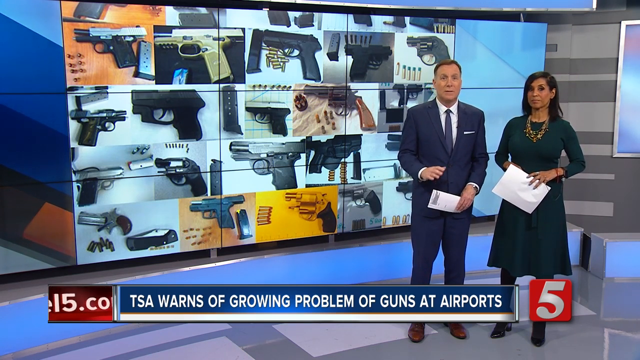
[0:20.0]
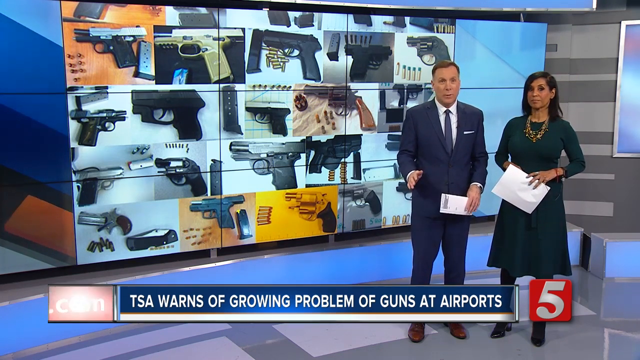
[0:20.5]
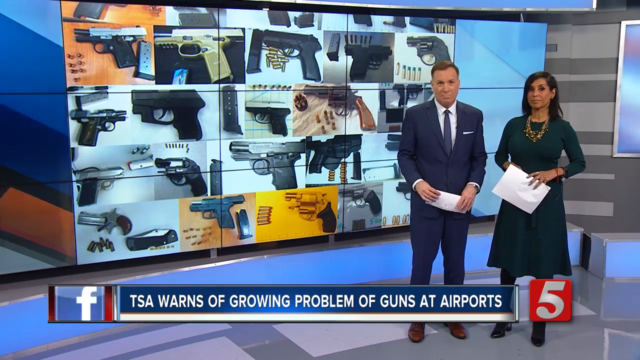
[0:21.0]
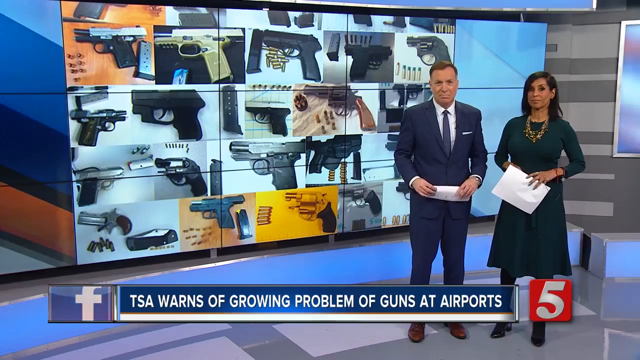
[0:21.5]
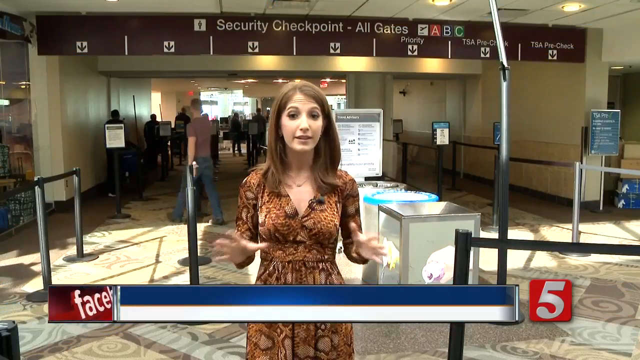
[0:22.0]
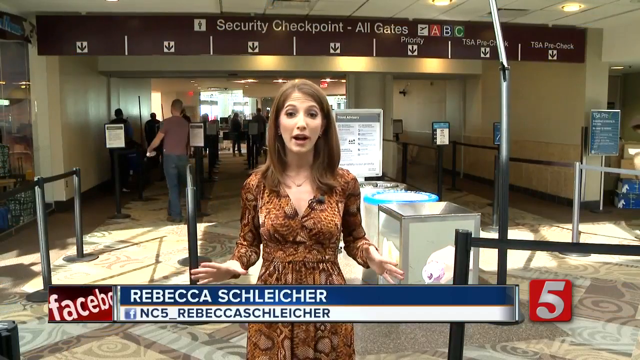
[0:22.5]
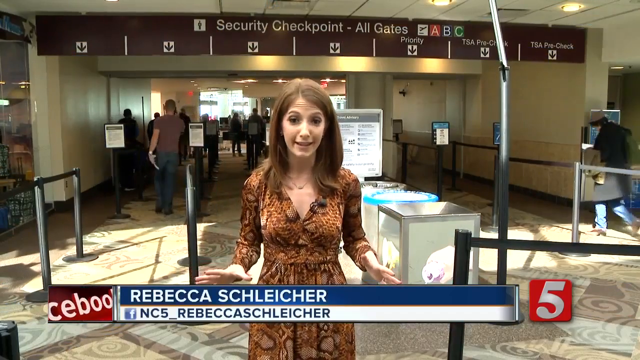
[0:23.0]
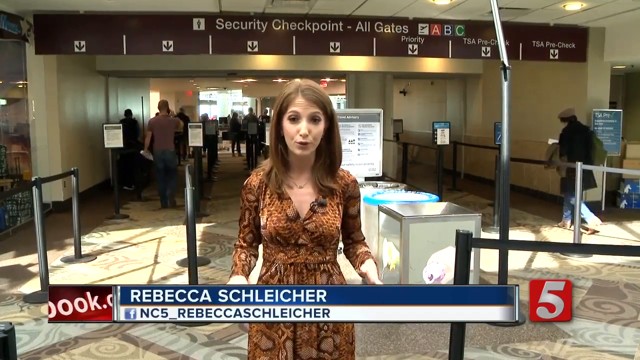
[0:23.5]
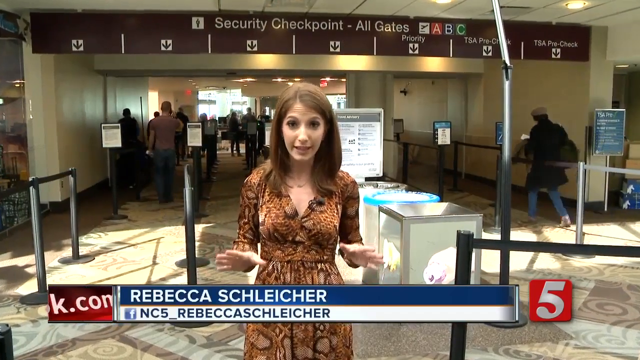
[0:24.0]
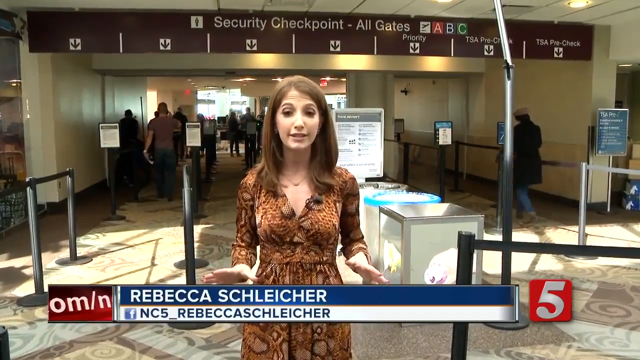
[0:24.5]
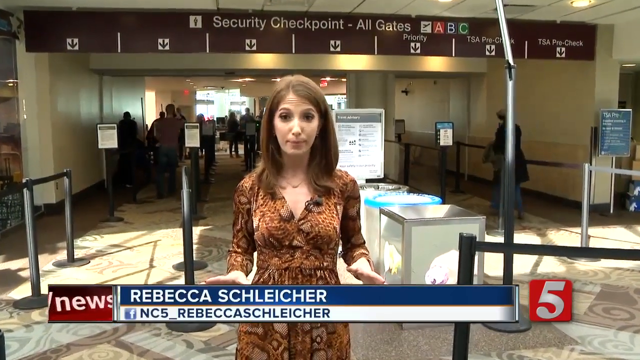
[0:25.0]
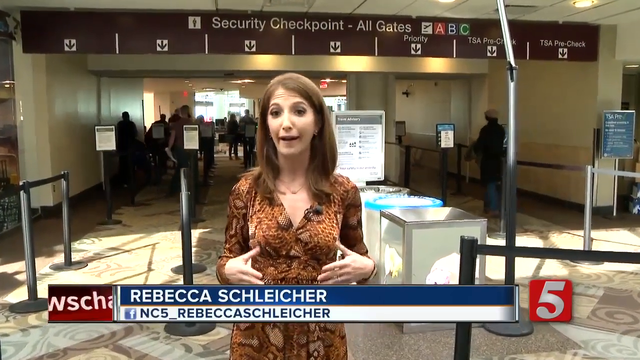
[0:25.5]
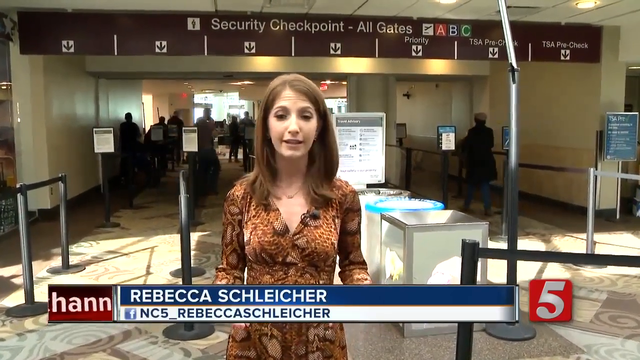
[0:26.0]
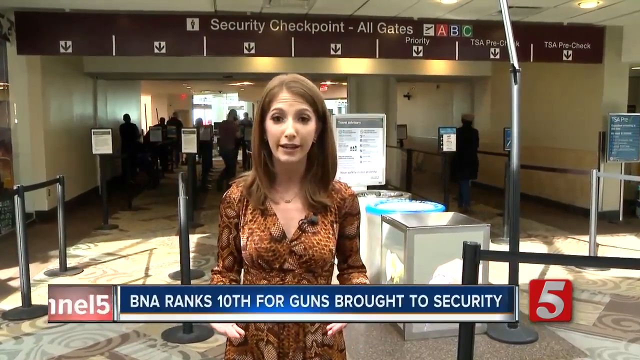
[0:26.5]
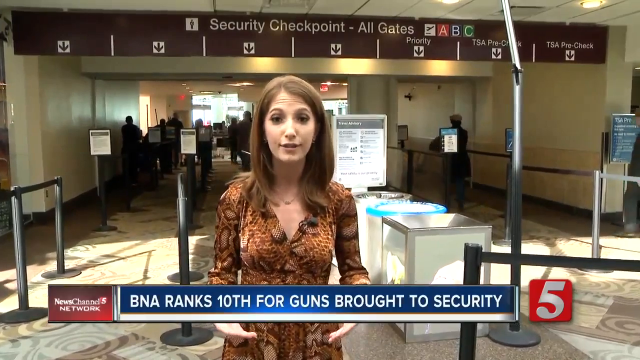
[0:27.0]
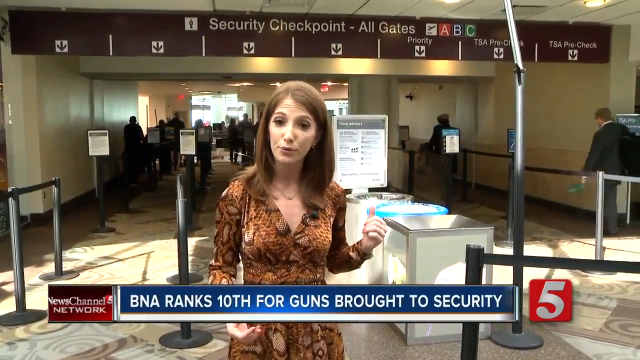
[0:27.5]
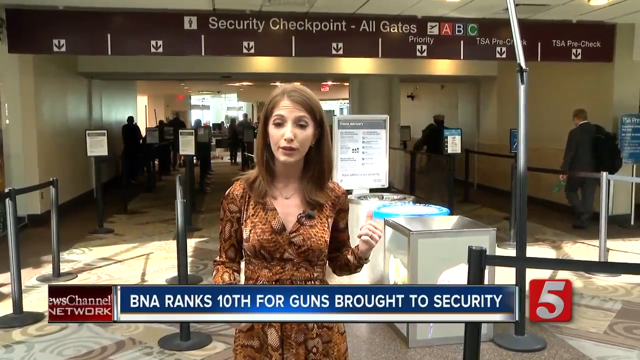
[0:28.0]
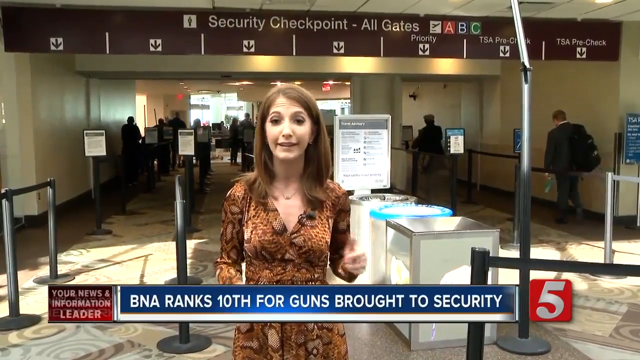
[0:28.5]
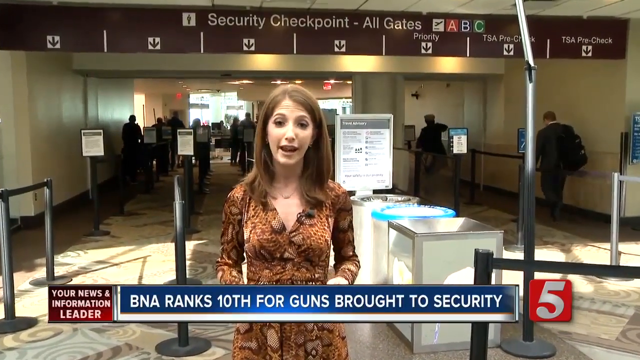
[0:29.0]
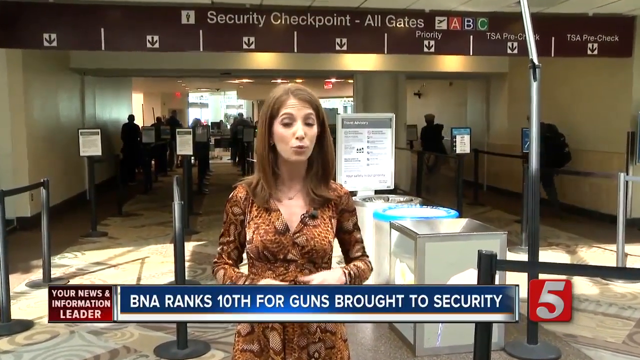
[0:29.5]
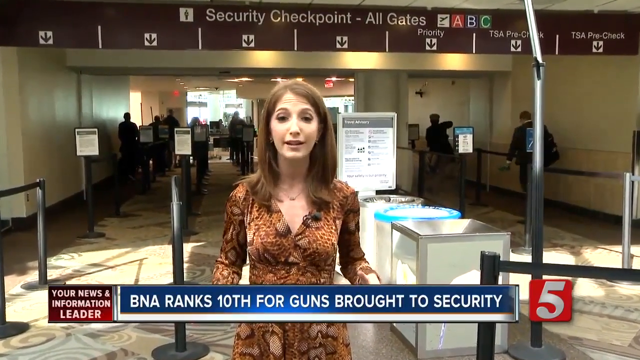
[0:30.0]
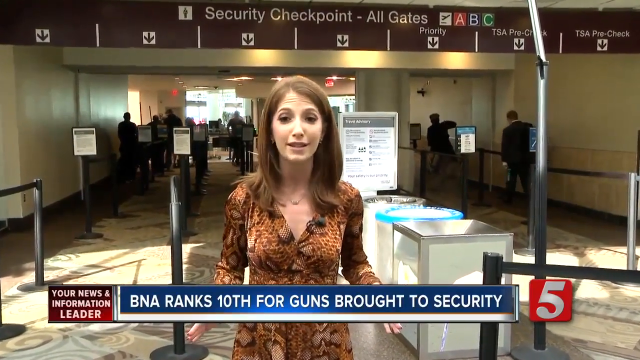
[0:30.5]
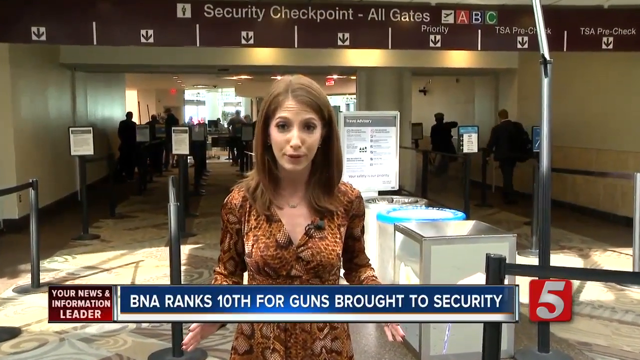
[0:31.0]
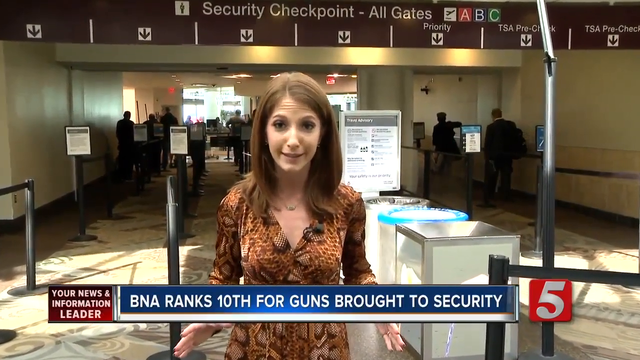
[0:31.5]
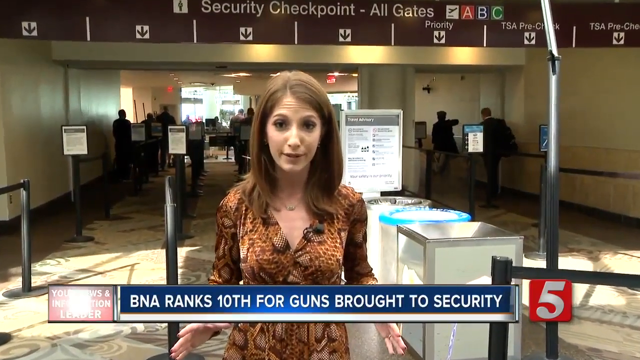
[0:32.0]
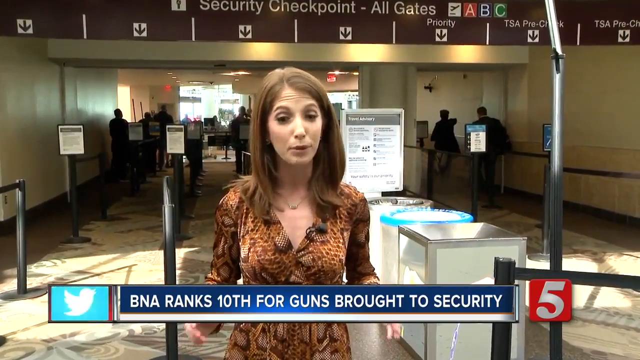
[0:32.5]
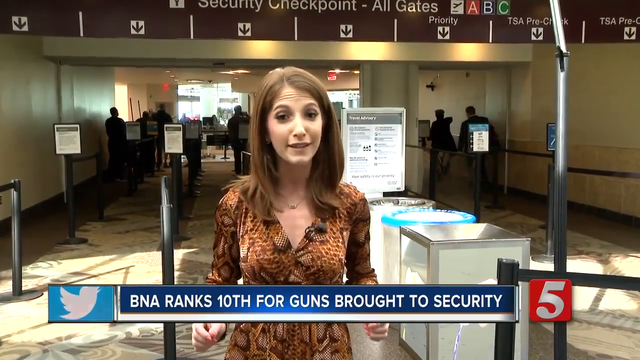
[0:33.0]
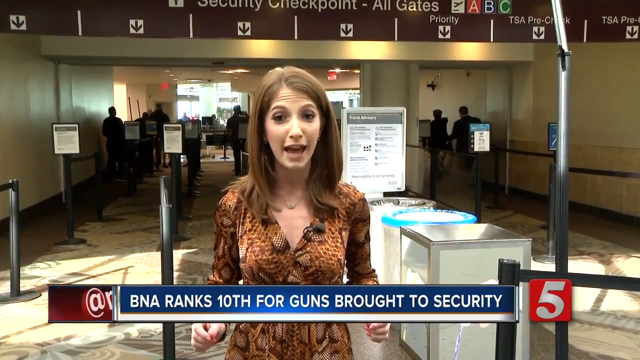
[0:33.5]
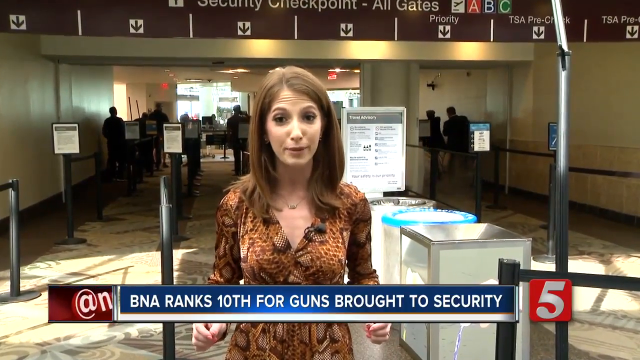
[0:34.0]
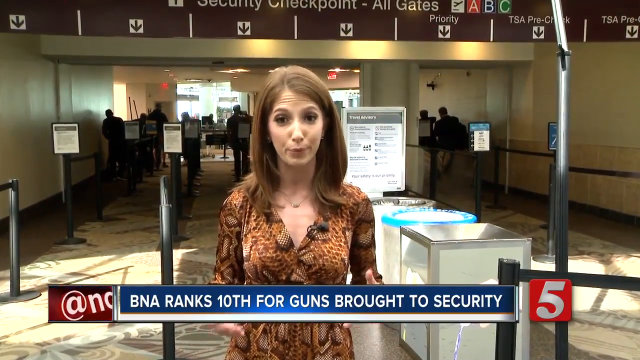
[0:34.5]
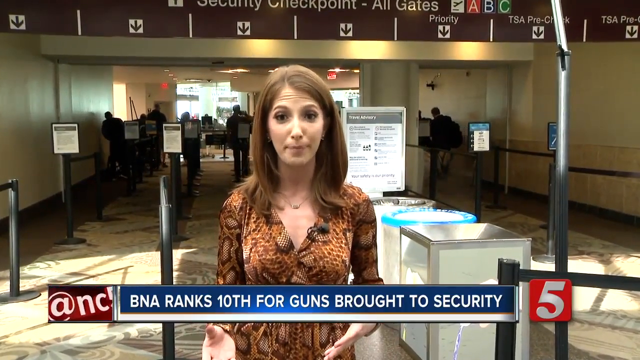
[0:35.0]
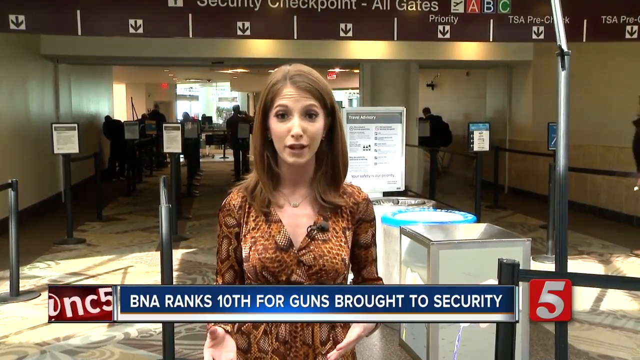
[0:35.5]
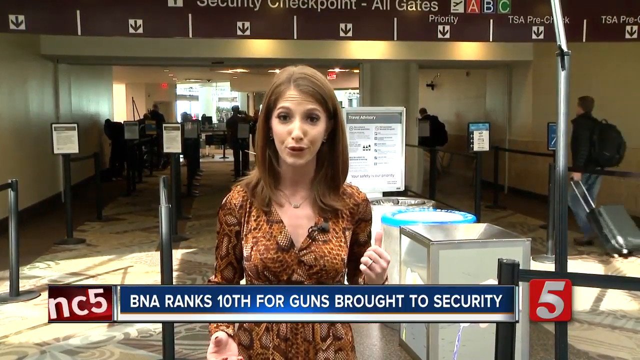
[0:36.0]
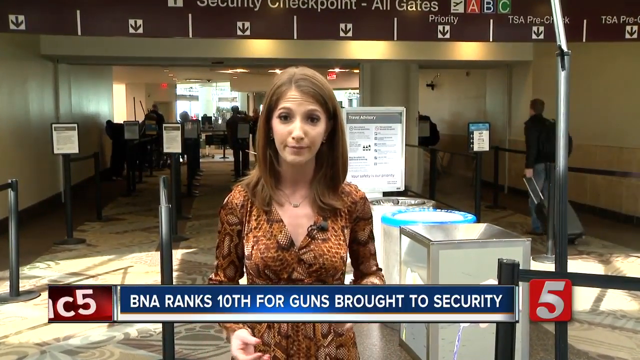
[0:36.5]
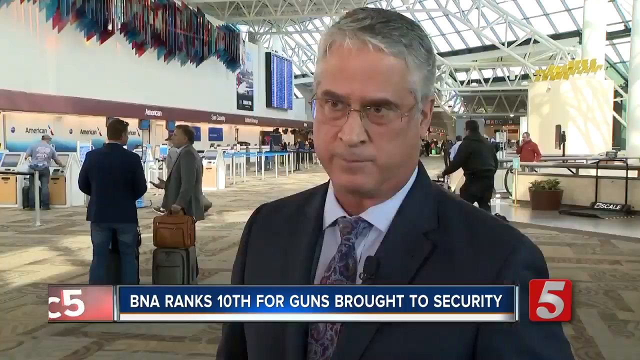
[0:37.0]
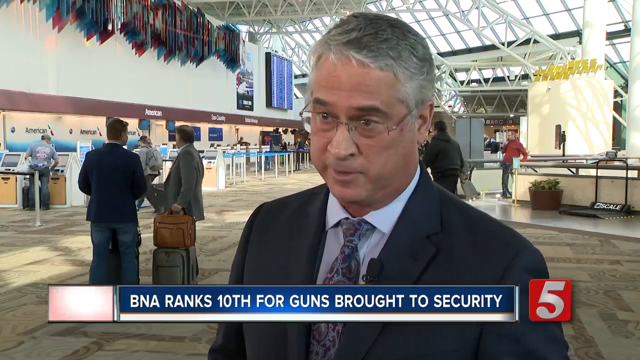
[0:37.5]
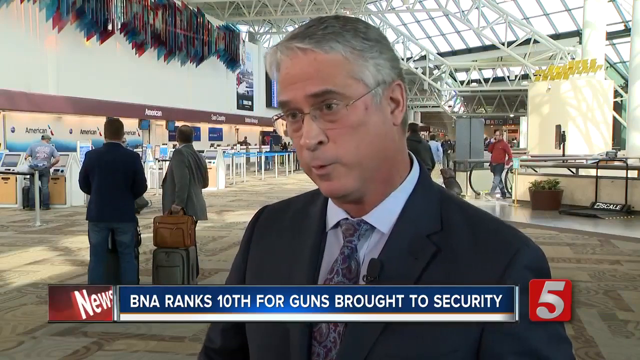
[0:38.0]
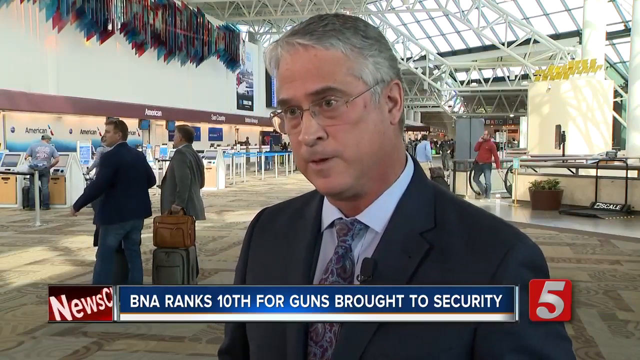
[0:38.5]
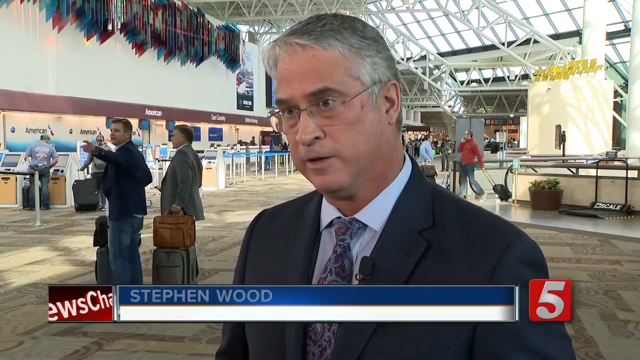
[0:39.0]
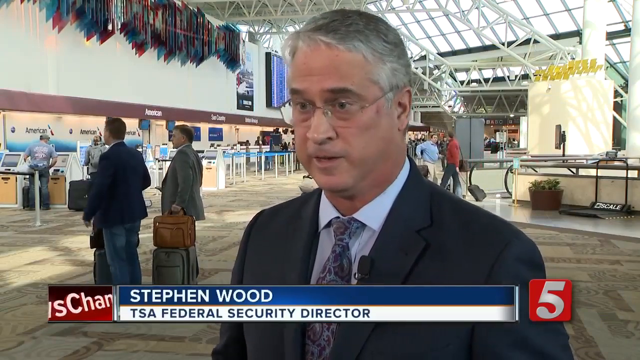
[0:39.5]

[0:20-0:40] The news report about people carrying guns to the airport continues. Rebecca from NC5 reports from the airport, and in the background there is a security checkpoint for all gates ABC where people are being checked for weapons or guns. It is shown that BNA ranks number 10 for guns brought to security. Stephen Wood, the TSA federal security director, appears and speaks about the guns.